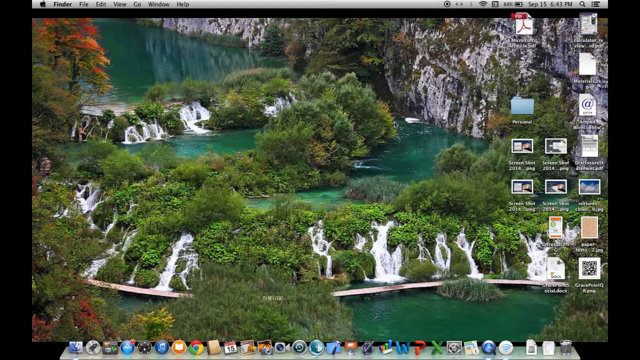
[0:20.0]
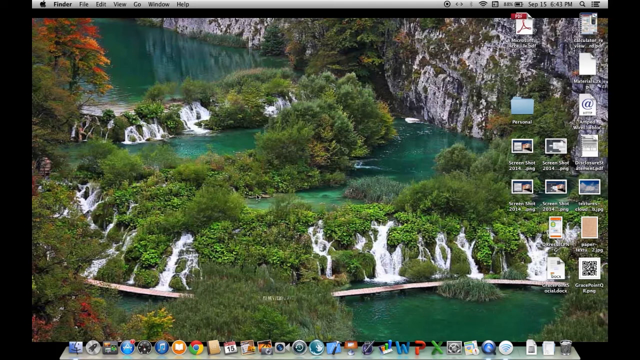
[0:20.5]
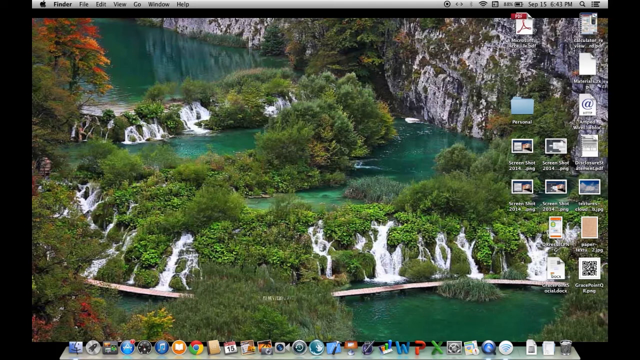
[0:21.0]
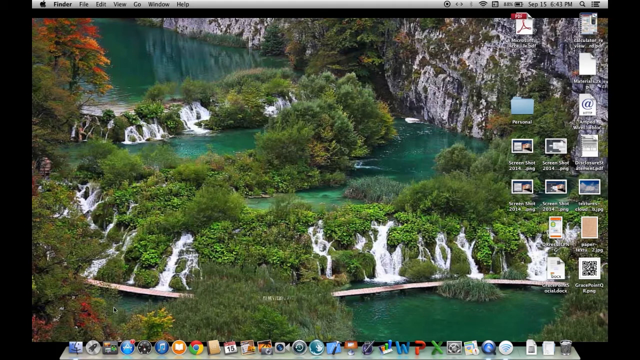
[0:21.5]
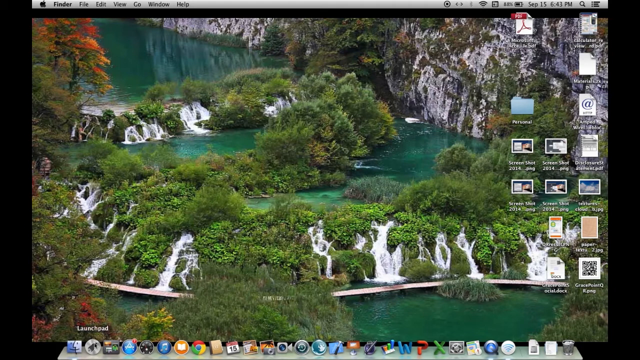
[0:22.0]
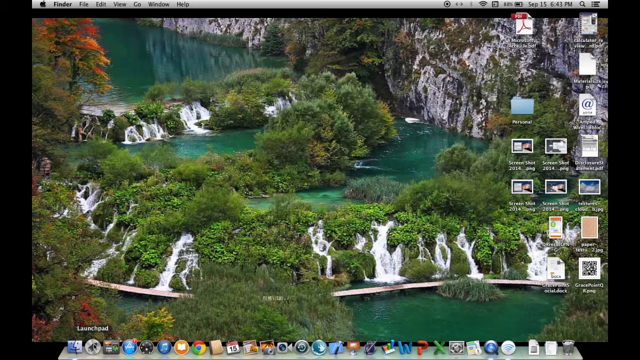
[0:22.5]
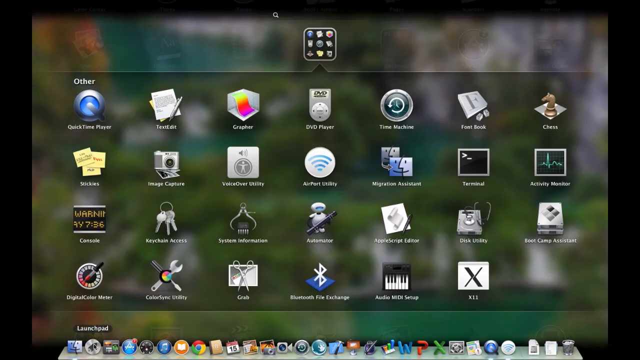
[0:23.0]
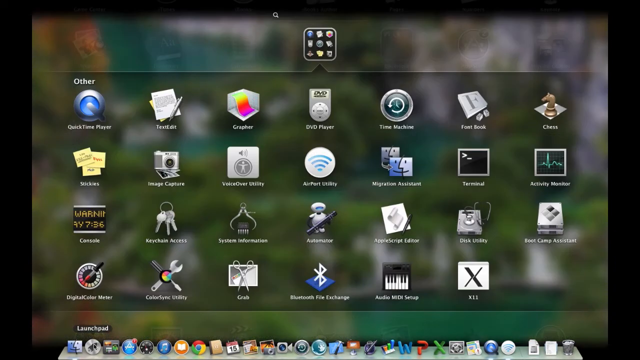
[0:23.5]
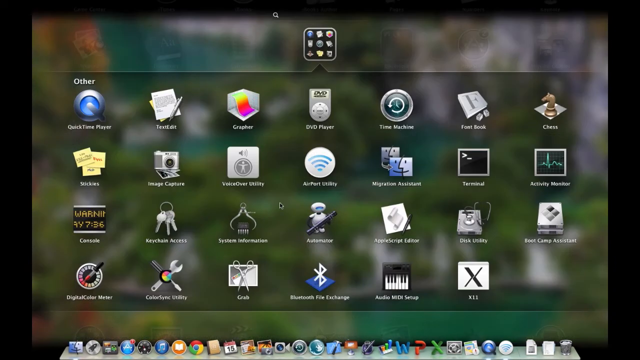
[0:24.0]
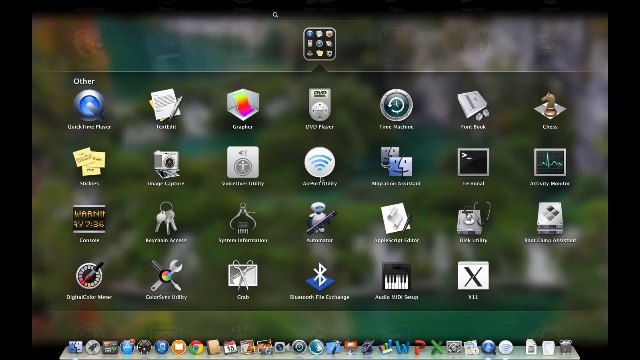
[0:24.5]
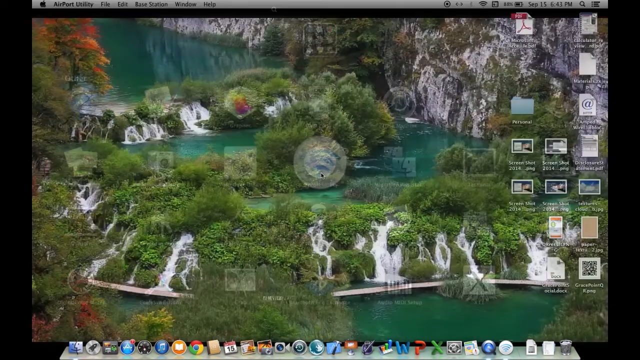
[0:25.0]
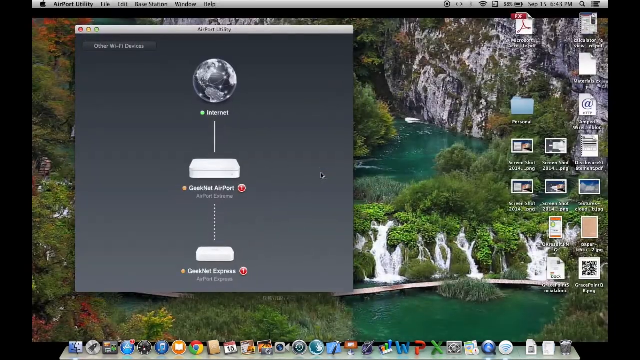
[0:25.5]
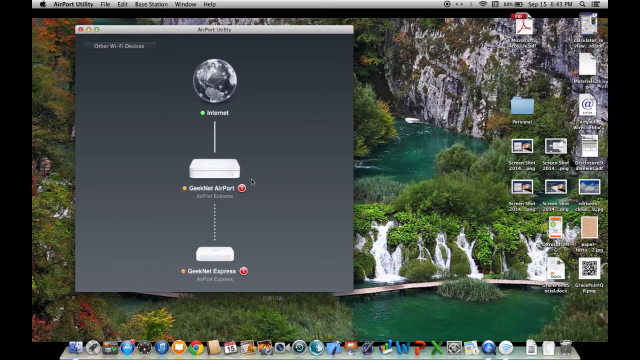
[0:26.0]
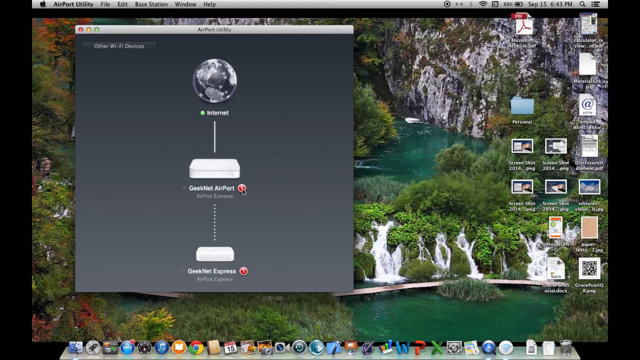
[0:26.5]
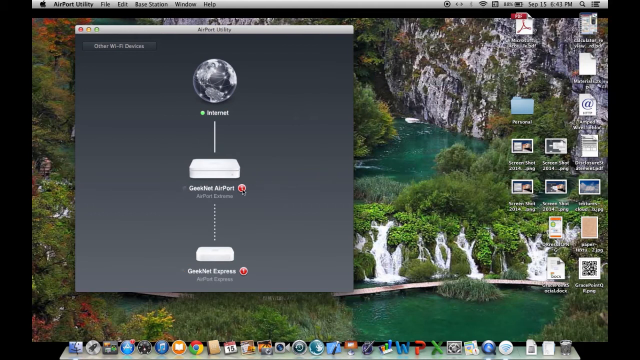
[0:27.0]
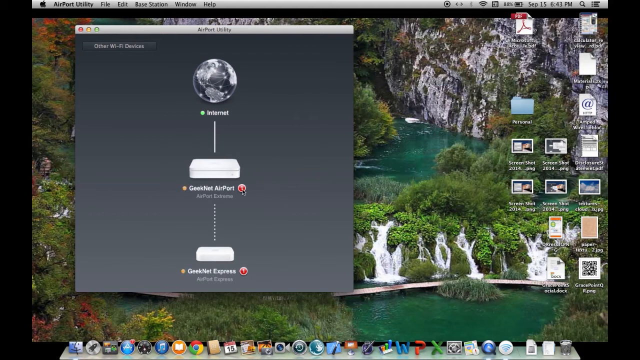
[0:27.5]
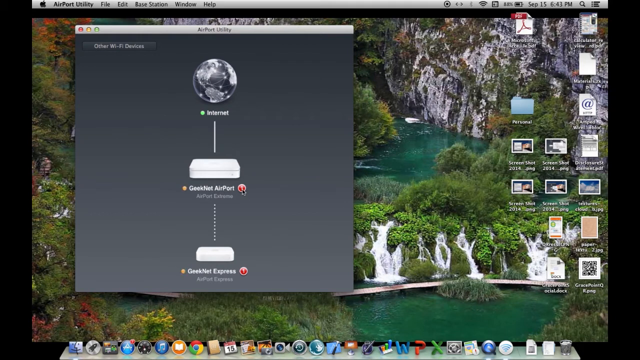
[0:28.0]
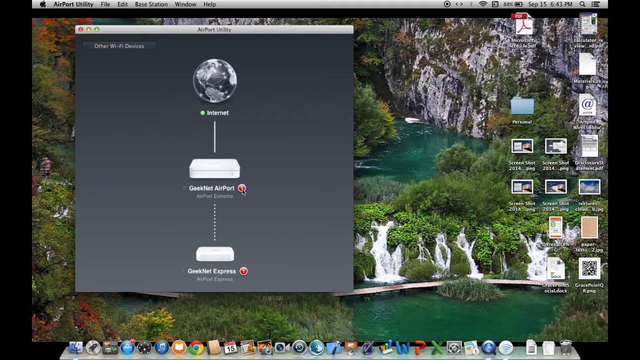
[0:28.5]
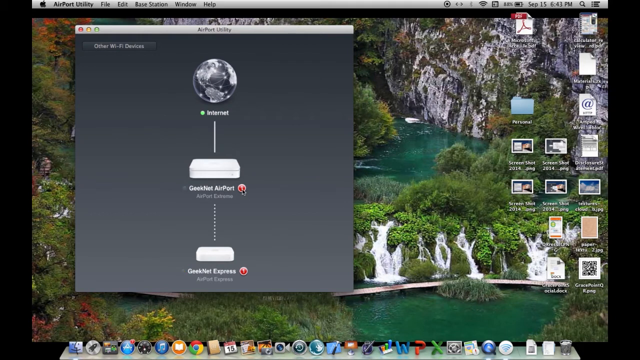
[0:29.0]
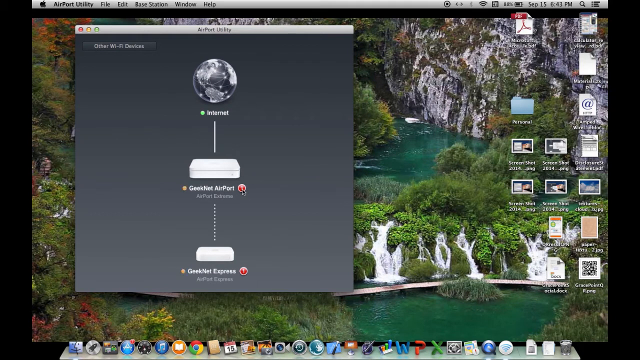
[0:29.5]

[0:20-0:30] The background picture shows cliffs, waterfalls with green water, bushes, and what look like trees since they are much taller than the bushes, in an exotic-looking place. There is a little red-colored foliage on the left and rocks on the right. The mouse seems to come in from the bottom left, and the user apparently clicks on the internet browser and then a control panel; the internet appears very quickly. Something round appears that almost looks like an AT&T port.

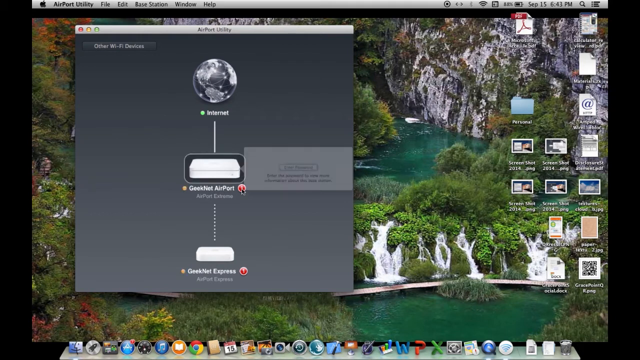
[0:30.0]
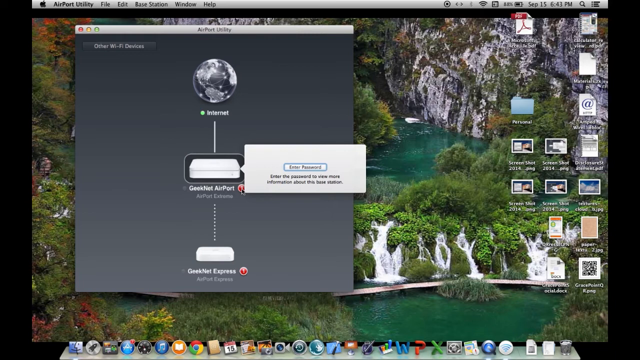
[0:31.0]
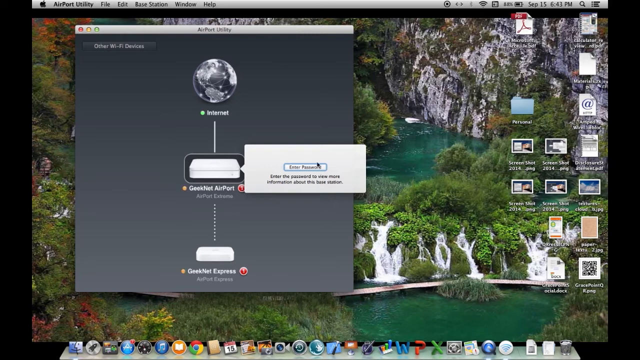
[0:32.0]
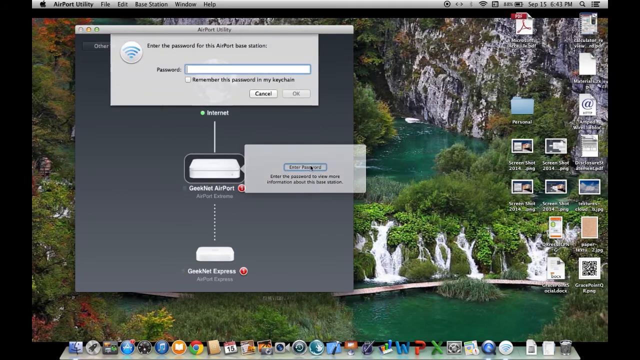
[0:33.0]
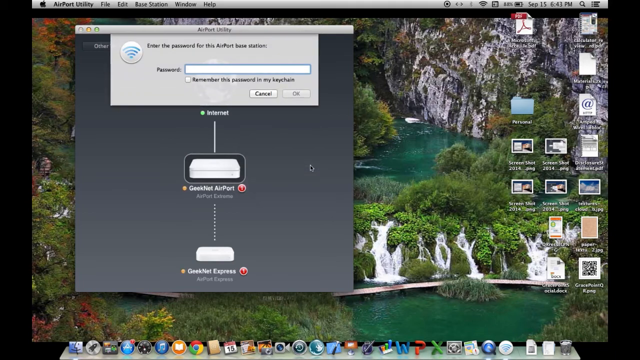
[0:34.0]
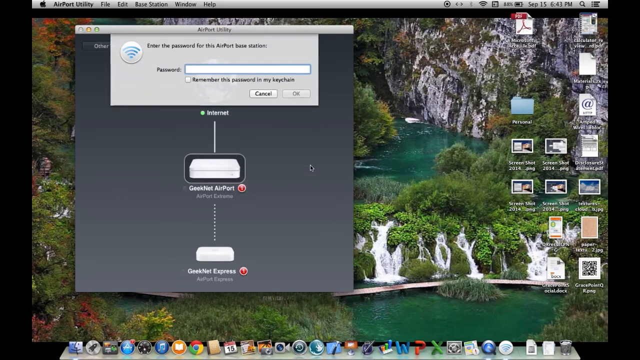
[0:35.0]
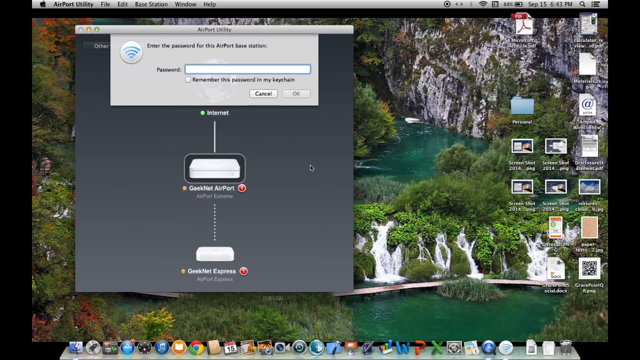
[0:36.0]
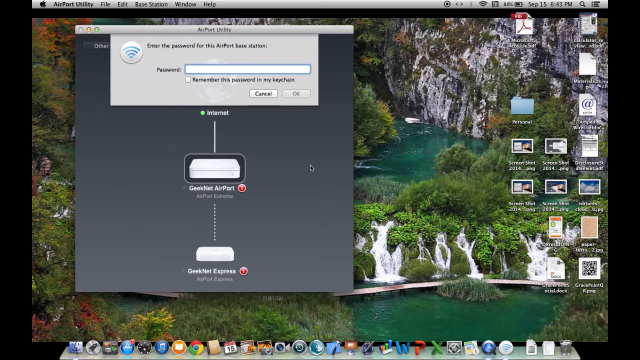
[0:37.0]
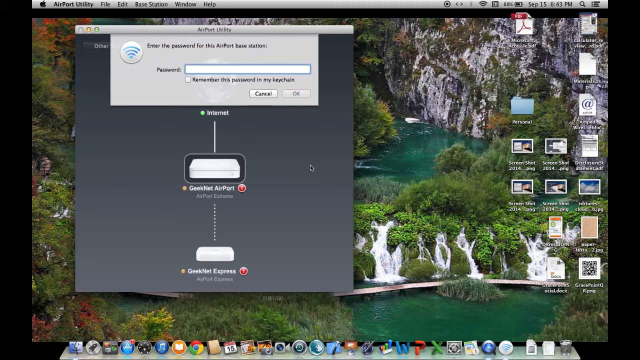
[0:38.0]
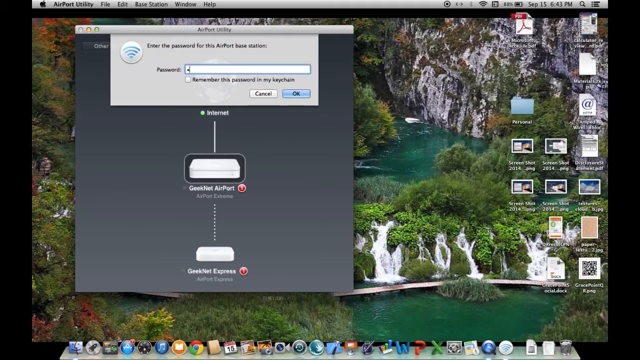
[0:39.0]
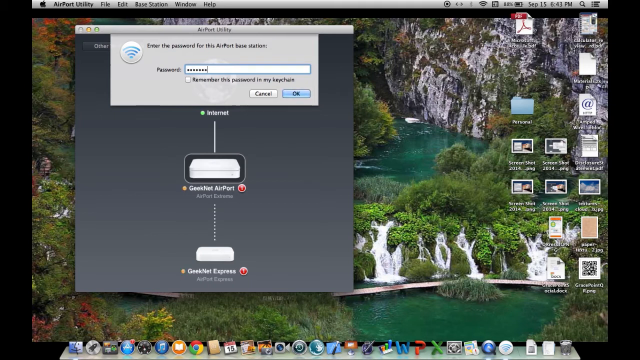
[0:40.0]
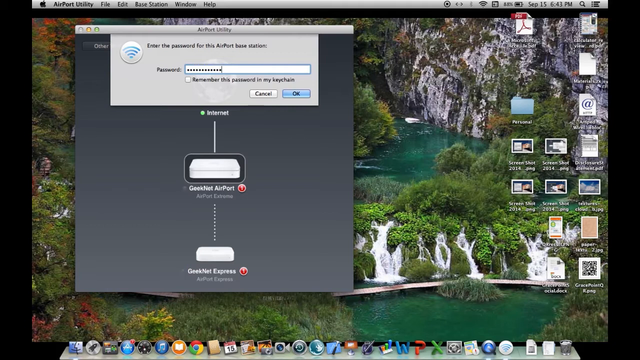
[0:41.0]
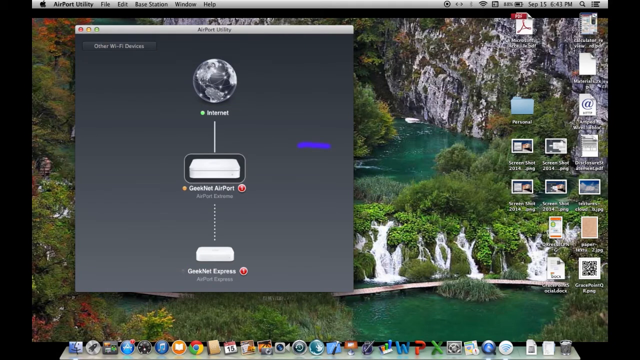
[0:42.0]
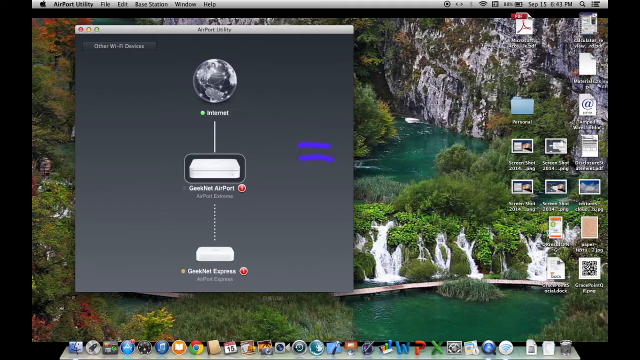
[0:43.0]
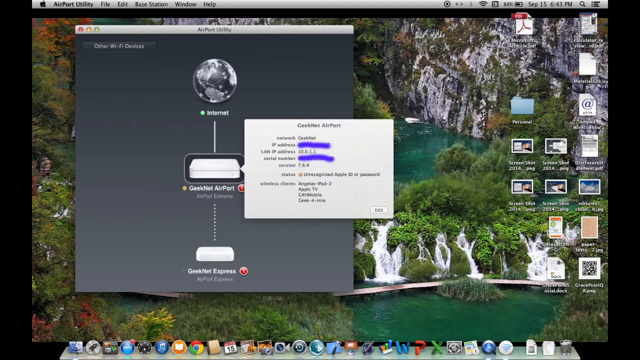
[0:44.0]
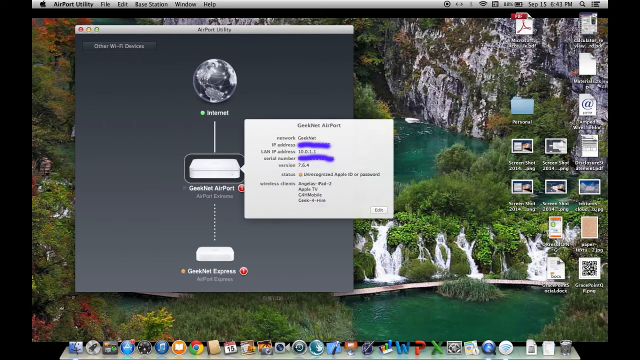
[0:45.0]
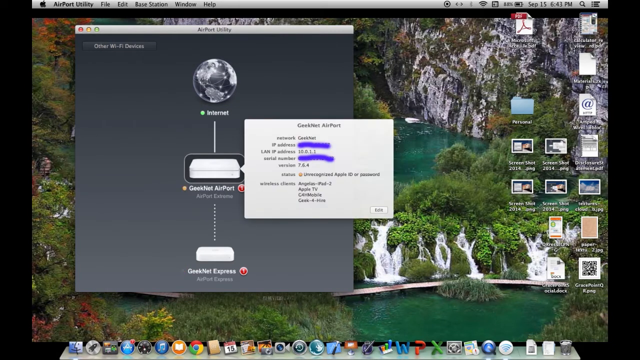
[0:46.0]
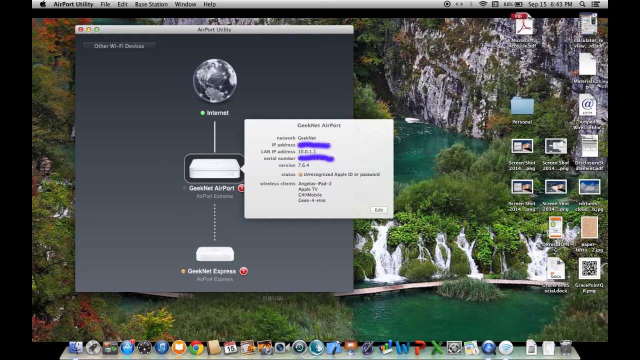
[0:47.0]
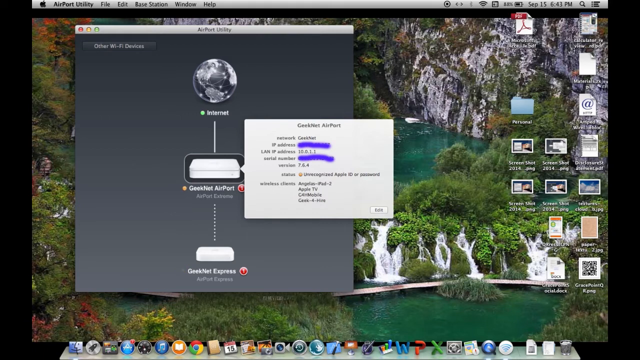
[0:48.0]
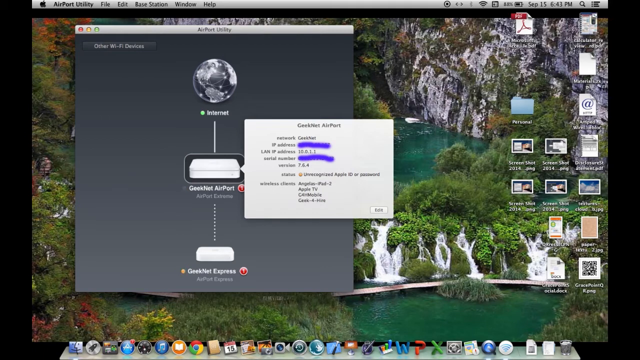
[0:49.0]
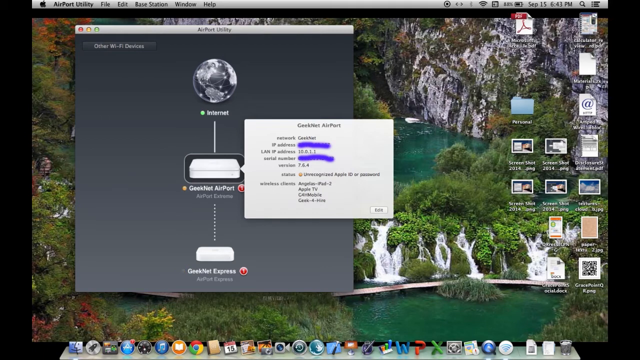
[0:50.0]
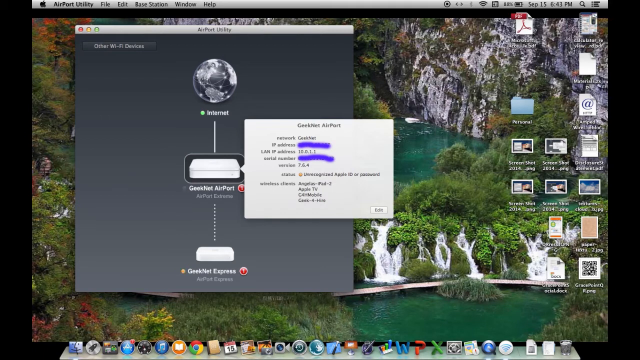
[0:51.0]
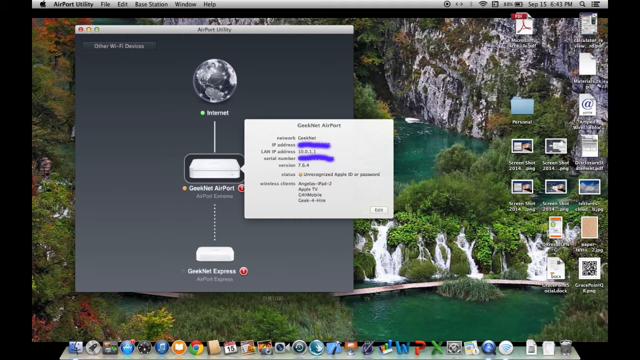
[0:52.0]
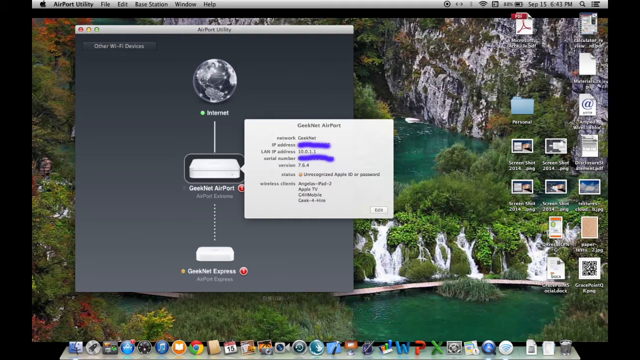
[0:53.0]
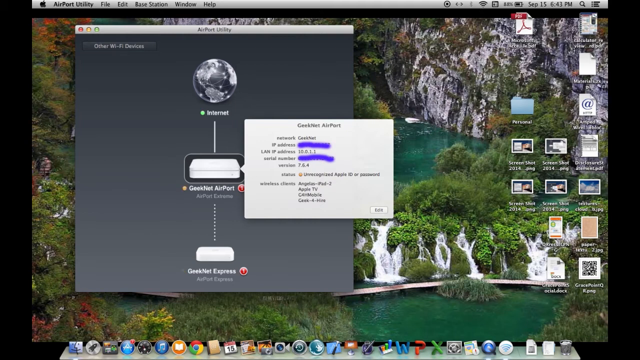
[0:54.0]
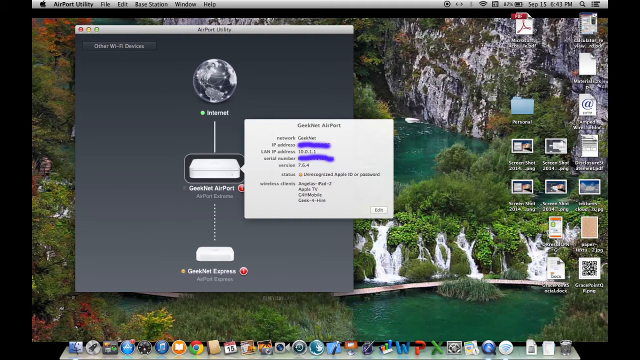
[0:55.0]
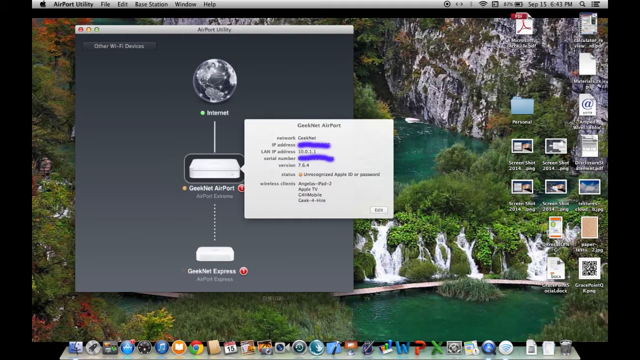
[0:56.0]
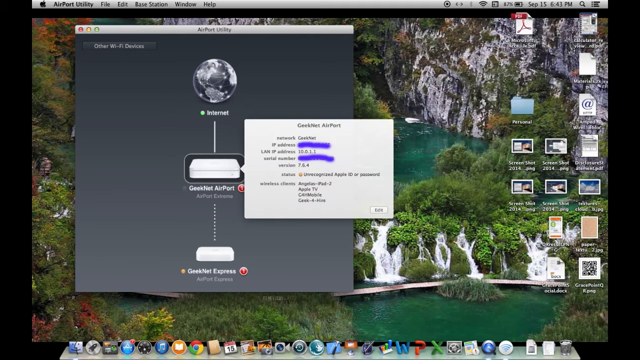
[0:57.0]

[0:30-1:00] A window for GreekNet Airport appears, and the user has to enter a password. Some information on the screen has been blacked out. The user is doing something with their Wi-Fi.